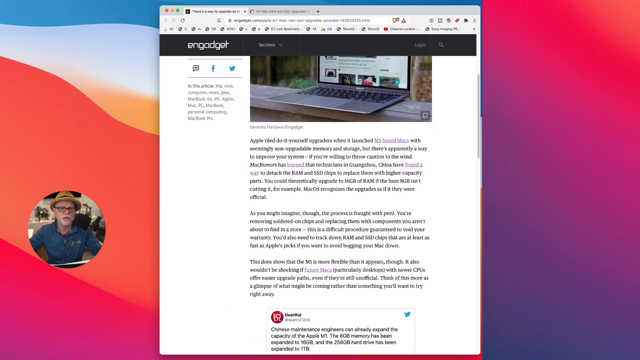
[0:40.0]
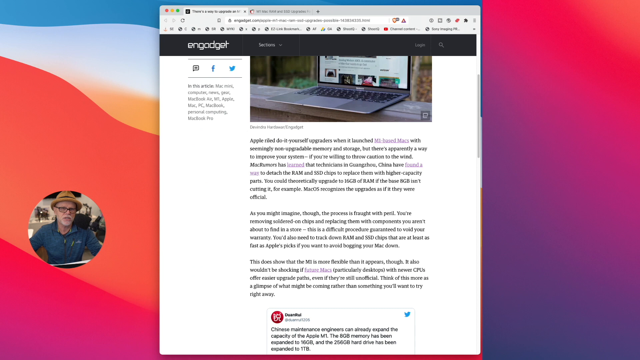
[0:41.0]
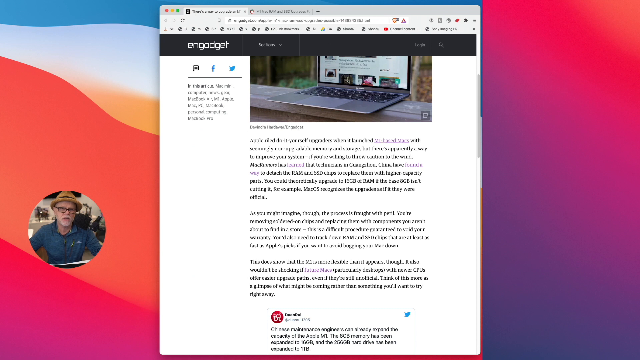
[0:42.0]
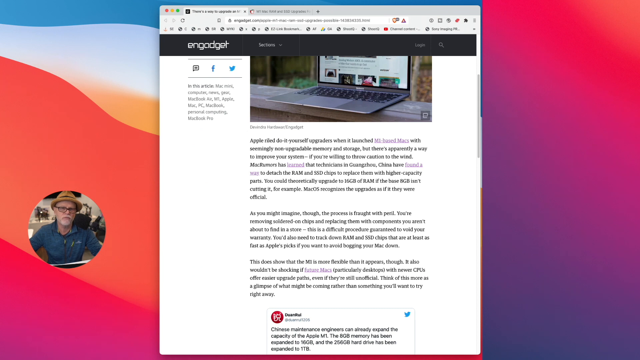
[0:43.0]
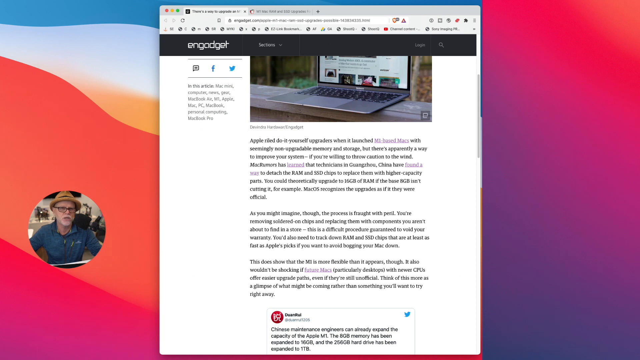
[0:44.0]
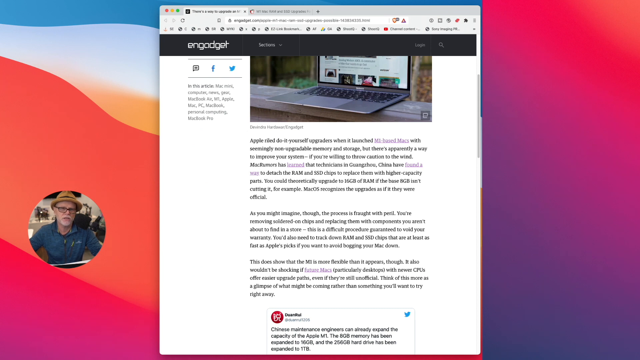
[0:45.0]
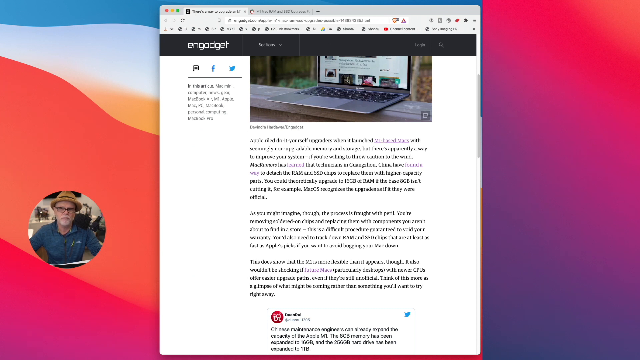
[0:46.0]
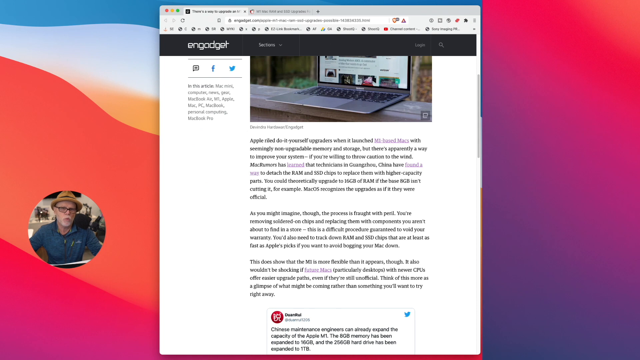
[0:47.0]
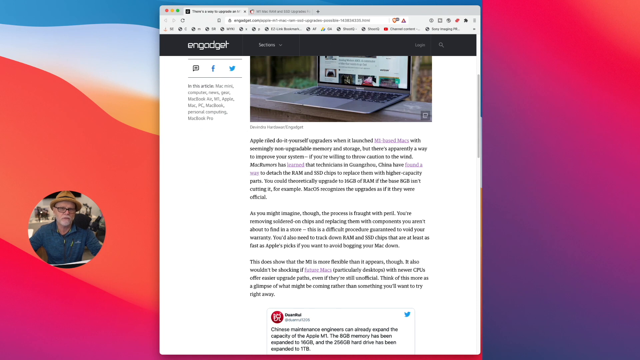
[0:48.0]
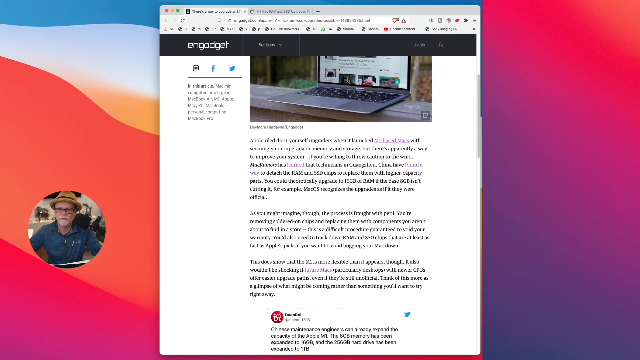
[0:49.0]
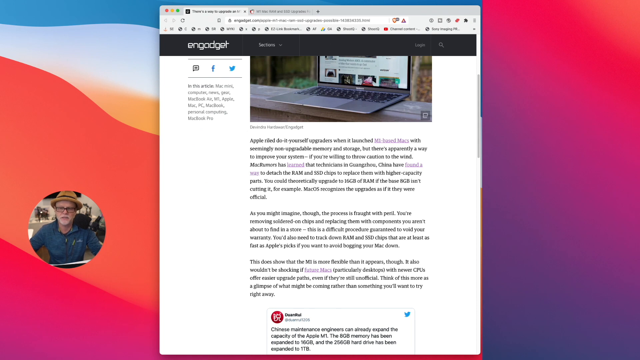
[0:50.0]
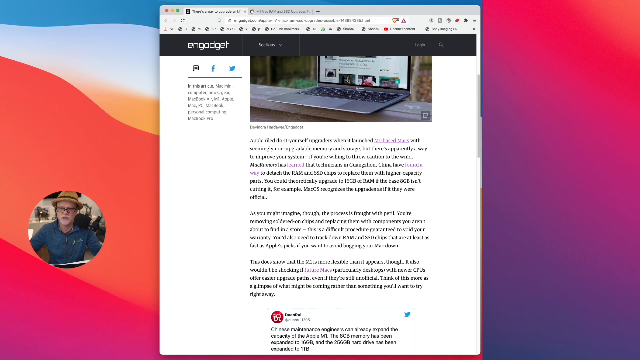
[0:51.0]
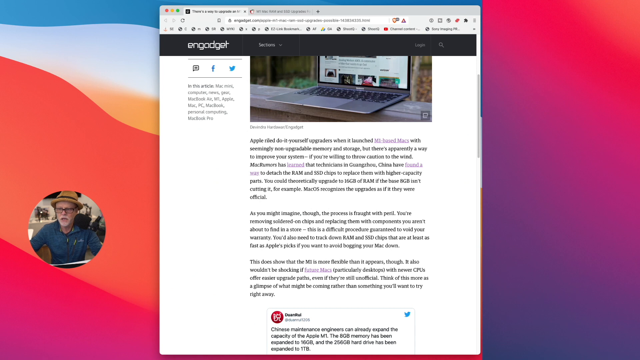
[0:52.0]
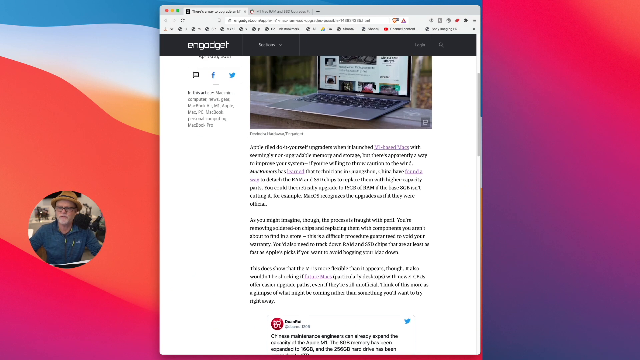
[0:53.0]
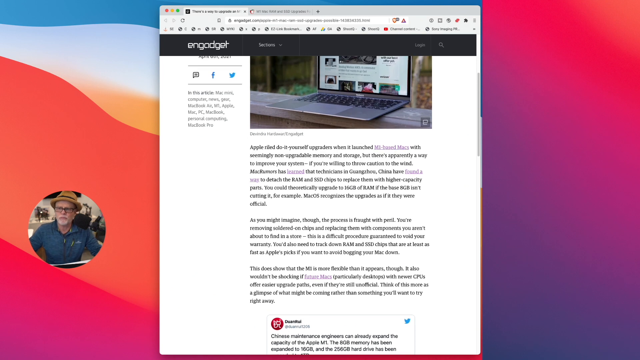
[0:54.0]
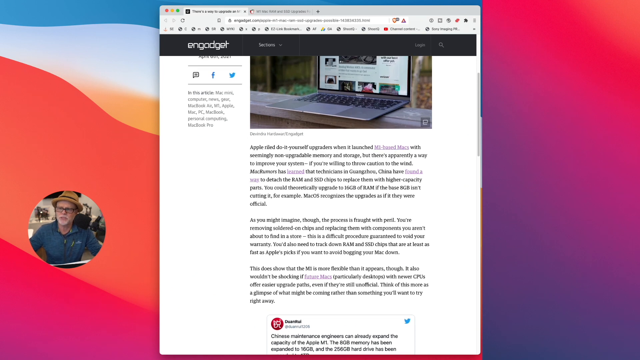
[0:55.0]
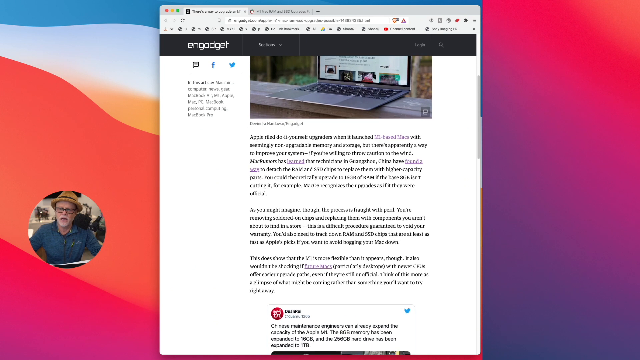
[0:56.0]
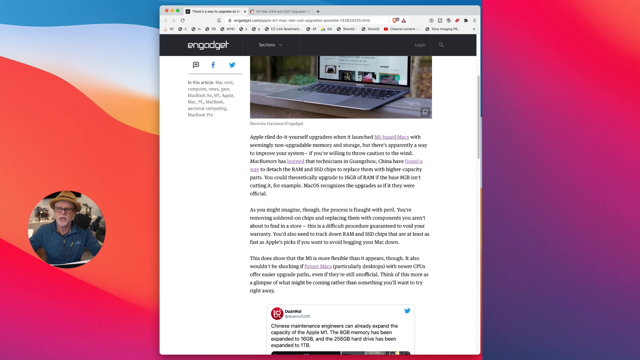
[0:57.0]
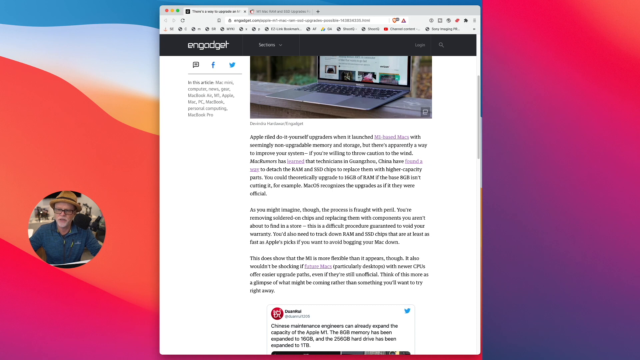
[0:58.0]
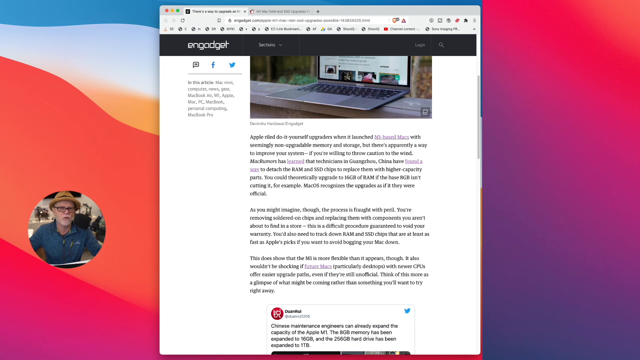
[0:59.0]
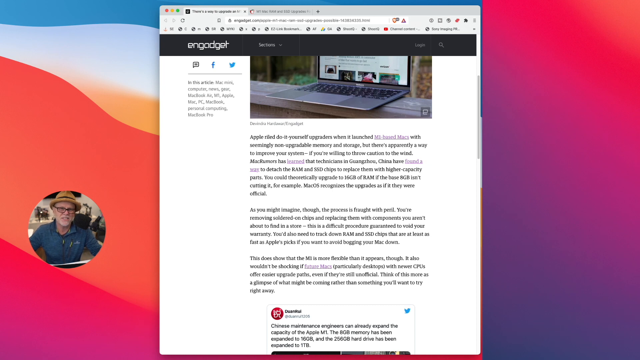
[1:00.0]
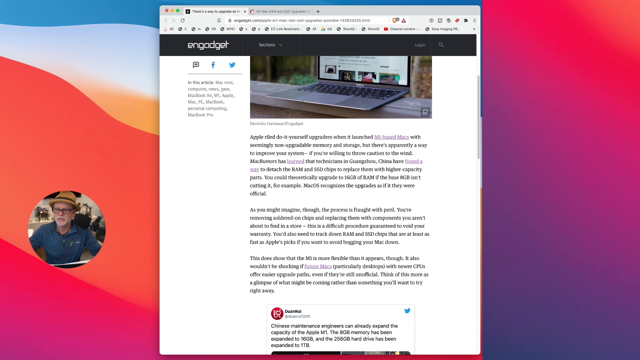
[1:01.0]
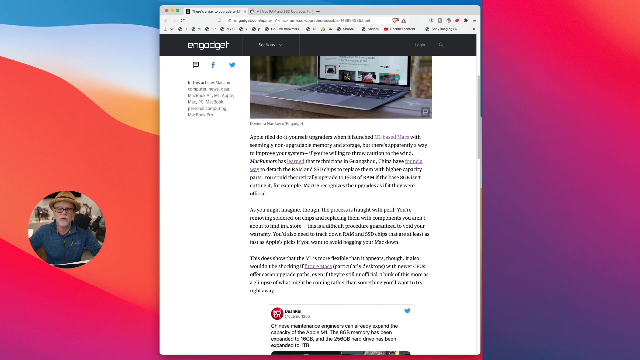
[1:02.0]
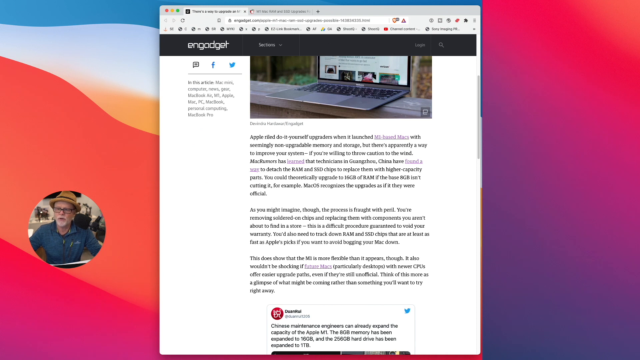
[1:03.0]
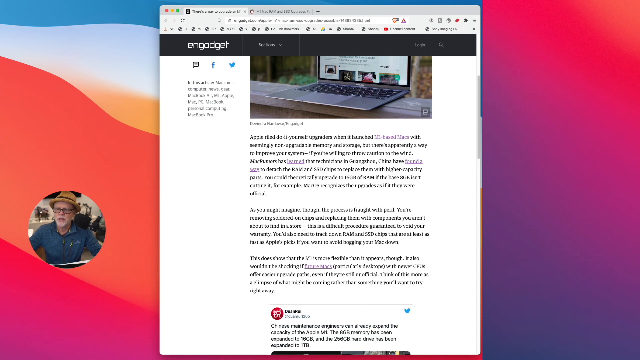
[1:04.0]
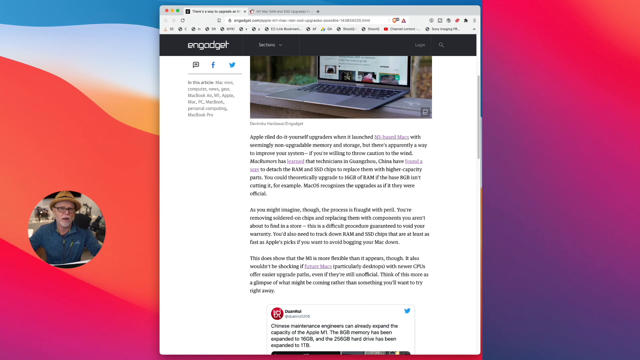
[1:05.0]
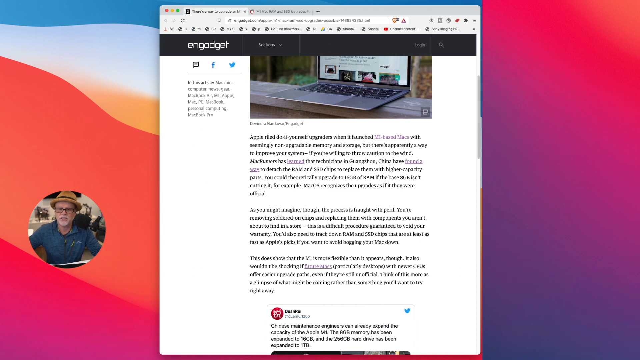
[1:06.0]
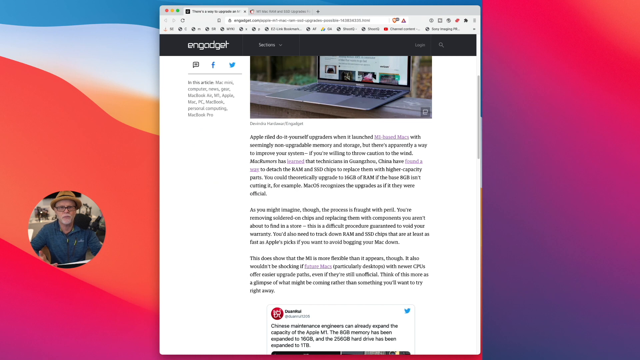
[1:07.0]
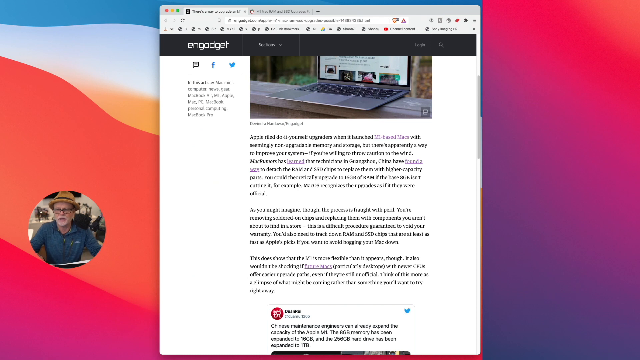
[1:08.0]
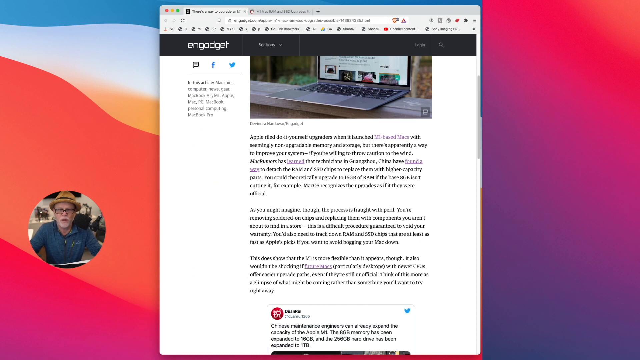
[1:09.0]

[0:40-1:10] The older gentleman now appears in a circle on the left side of the screen, with a colorful background in shades of red and orange, blue down the other side, and purple and pink. The article is still up; it looks like three paragraphs, but the words are too small to read. He scrolls back up to the top, where red, yellow and green circles are visible in the upper left corner. His mouth is moving as he talks.